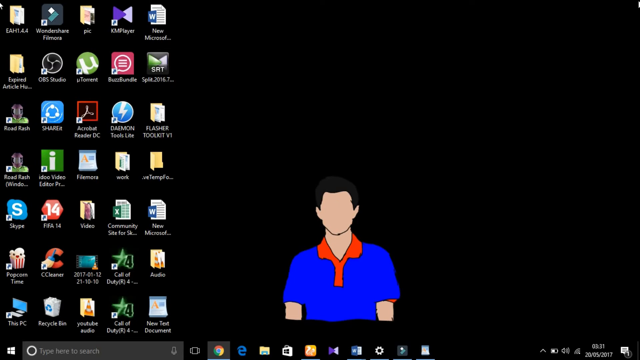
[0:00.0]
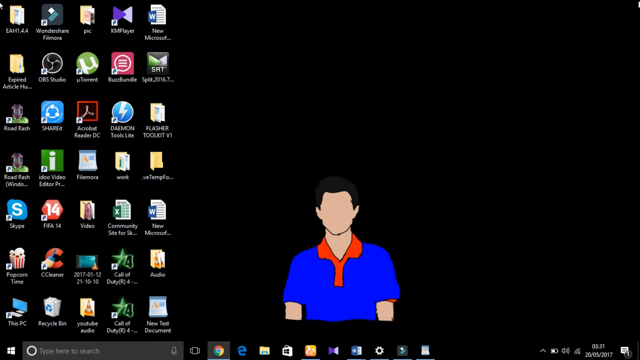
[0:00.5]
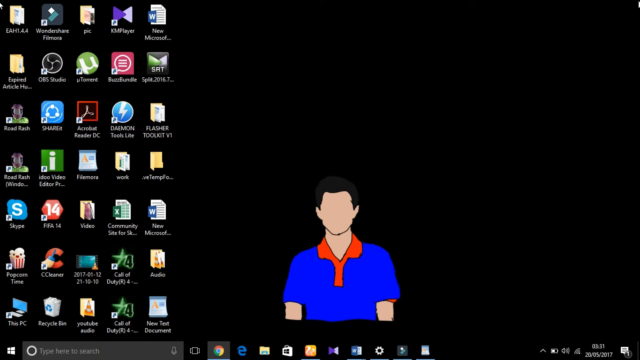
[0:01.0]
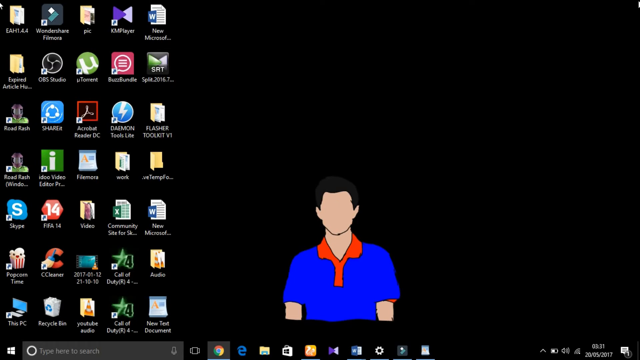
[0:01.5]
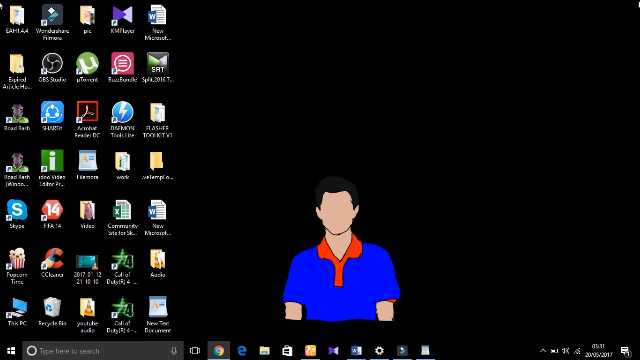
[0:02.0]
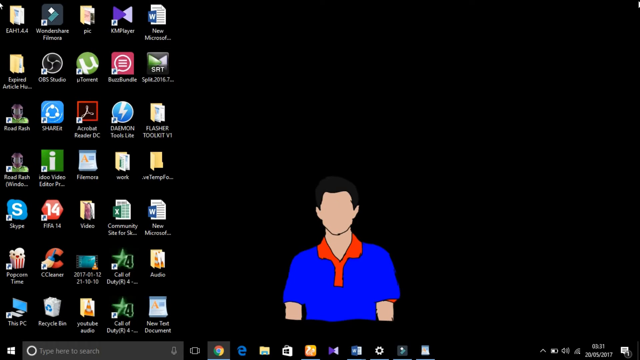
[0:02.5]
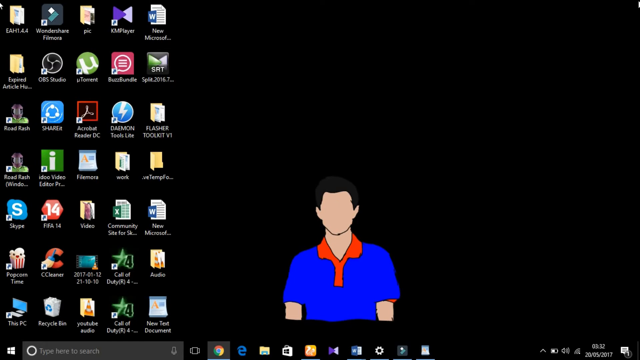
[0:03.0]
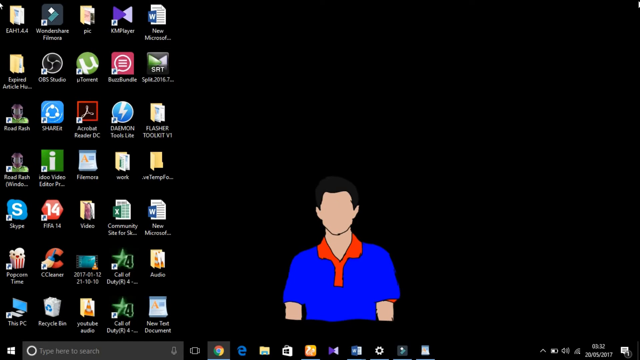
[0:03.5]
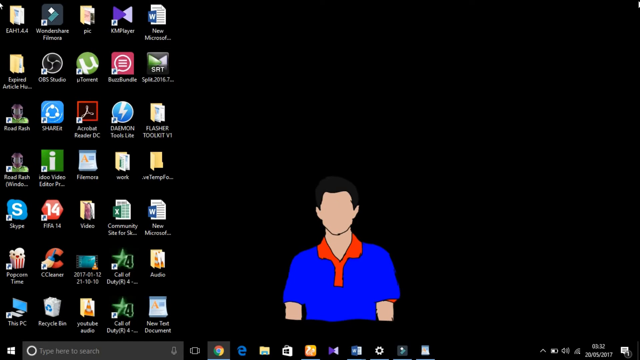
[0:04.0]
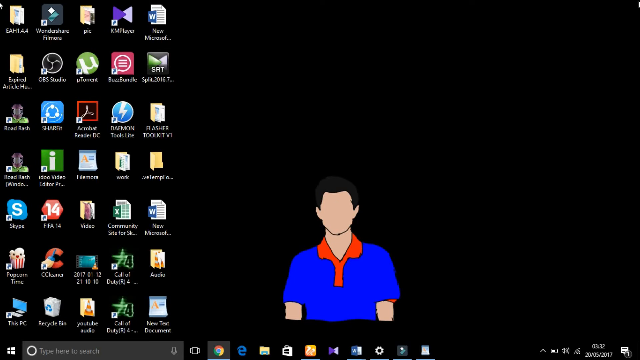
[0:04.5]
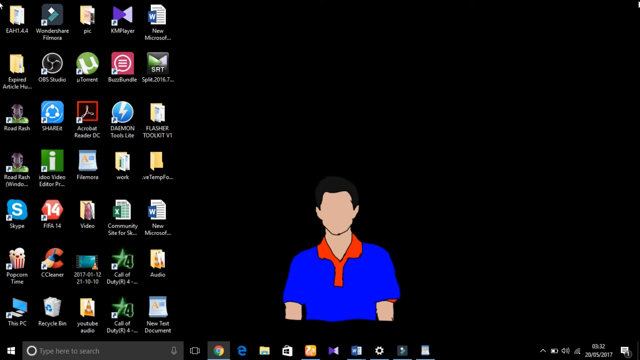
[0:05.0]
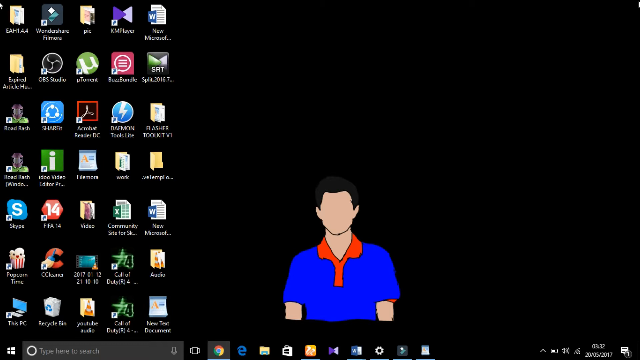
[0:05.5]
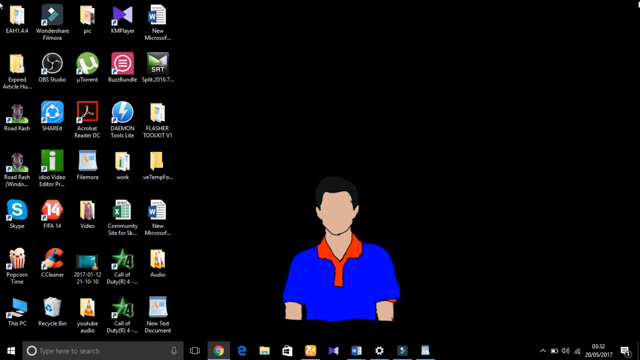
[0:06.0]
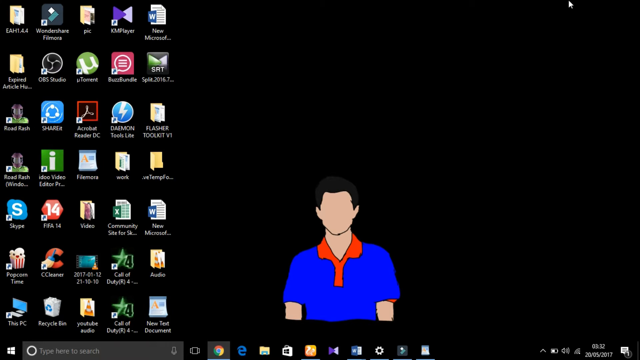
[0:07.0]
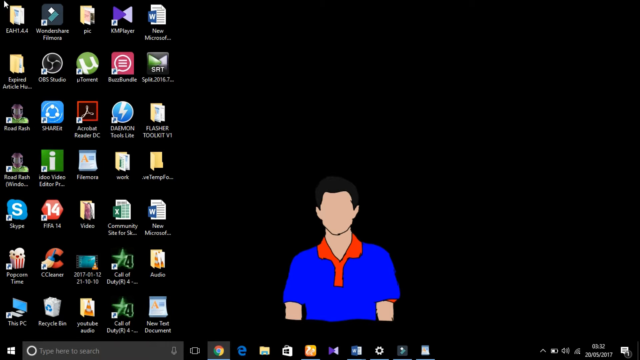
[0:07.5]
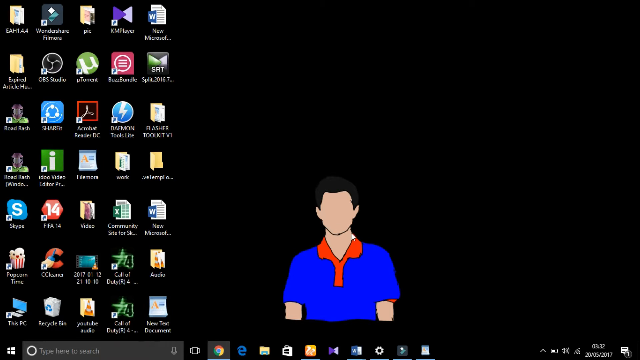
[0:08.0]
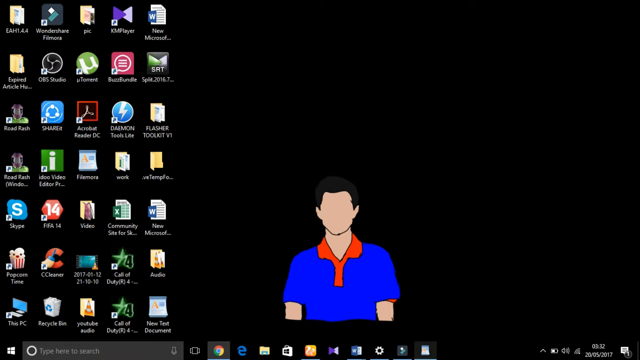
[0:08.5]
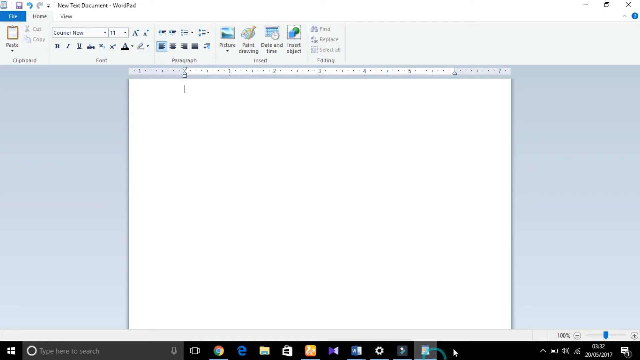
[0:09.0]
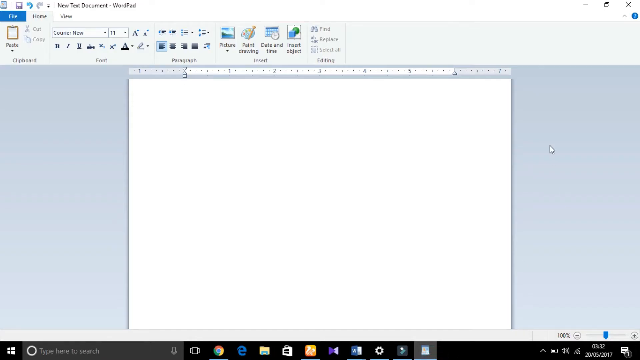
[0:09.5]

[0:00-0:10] A computer screen shows five columns of different desktop icons and shortcuts. At the bottom is a cartoon of a man in a blue polo with an orange collar; he has no features, has short brown hair, and is visible only from the torso up. The mouse clicks on the Word icon, which is already saved as a shortcut on the taskbar at the bottom of the screen. Word opens to a new document with the cursor blinking.